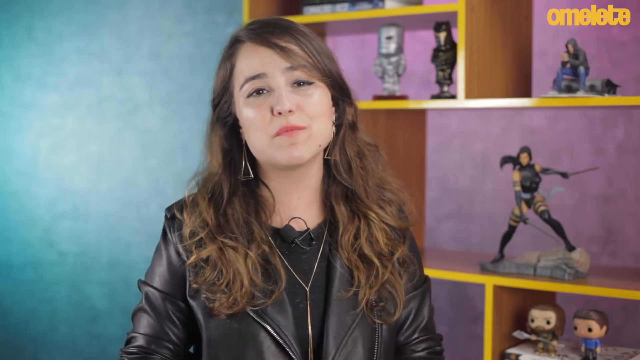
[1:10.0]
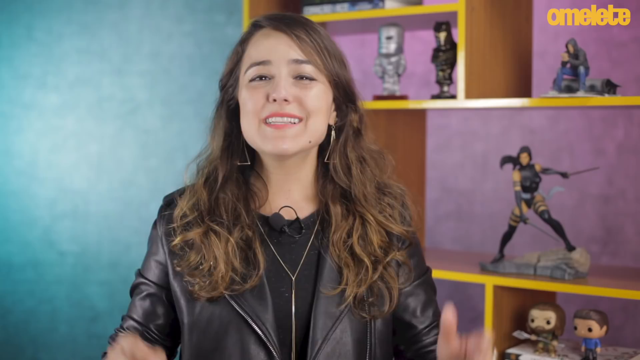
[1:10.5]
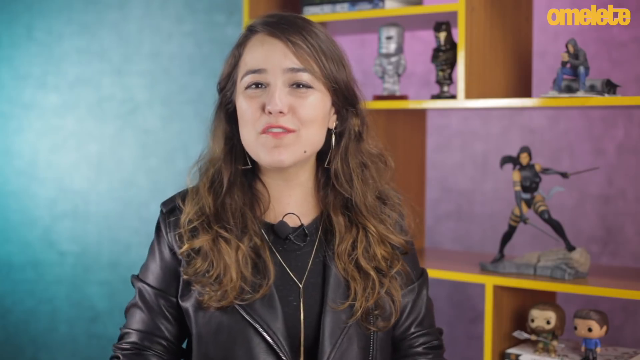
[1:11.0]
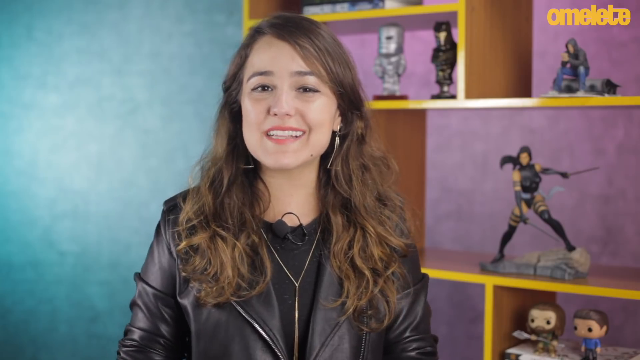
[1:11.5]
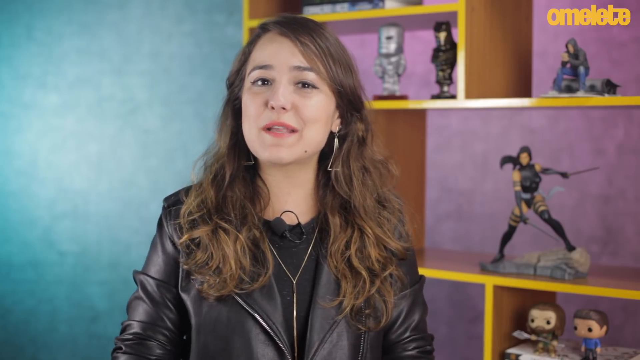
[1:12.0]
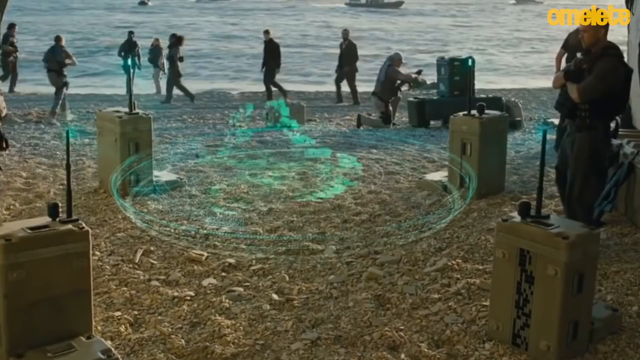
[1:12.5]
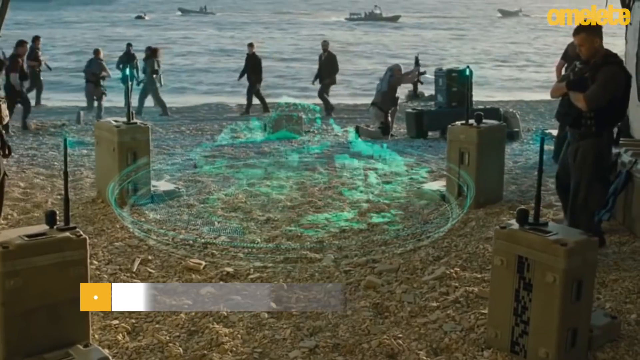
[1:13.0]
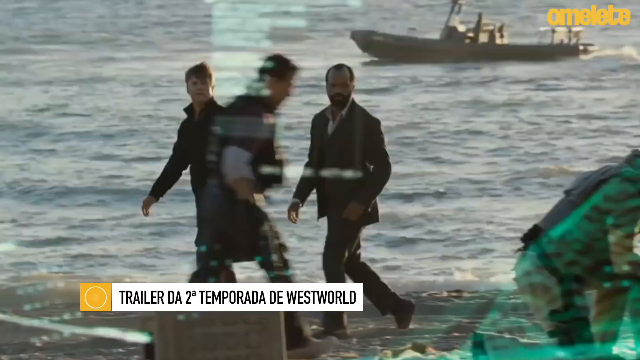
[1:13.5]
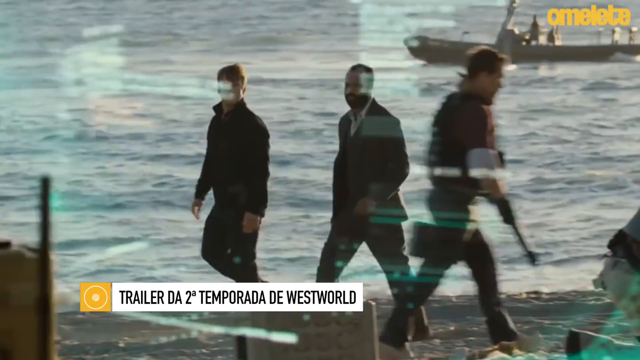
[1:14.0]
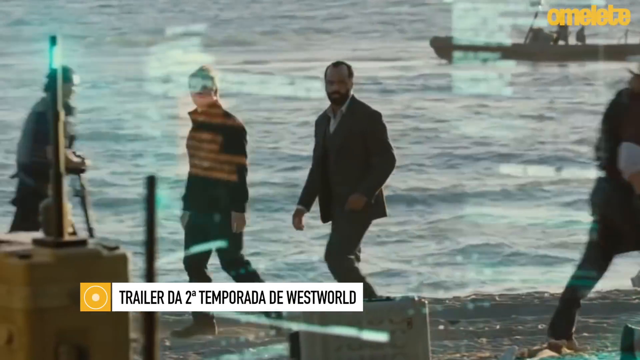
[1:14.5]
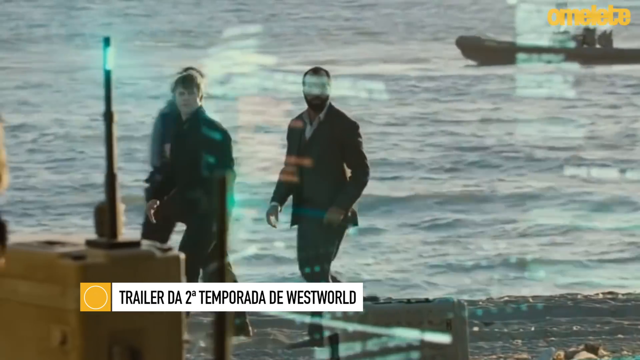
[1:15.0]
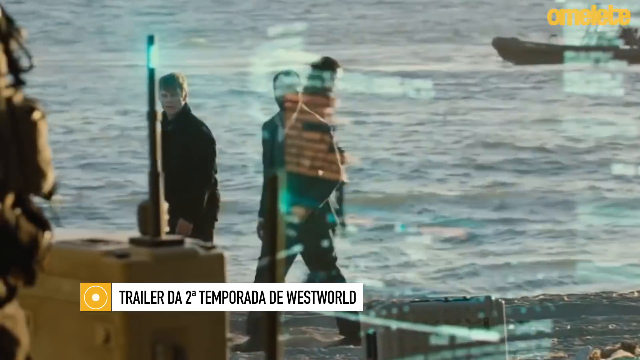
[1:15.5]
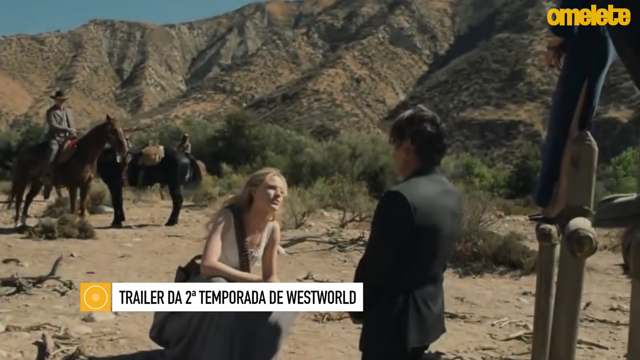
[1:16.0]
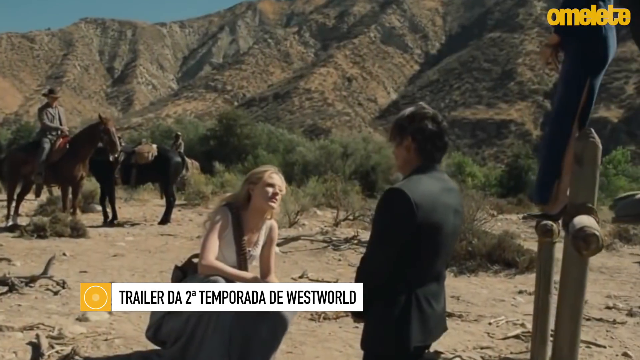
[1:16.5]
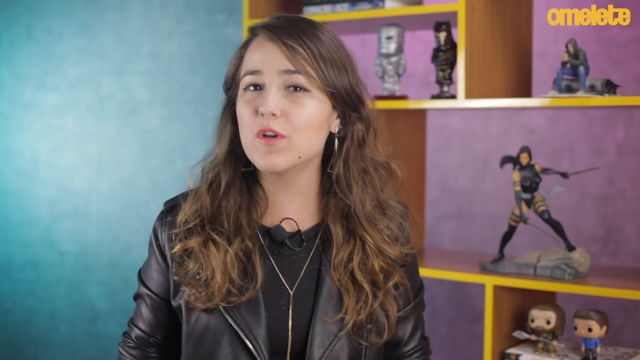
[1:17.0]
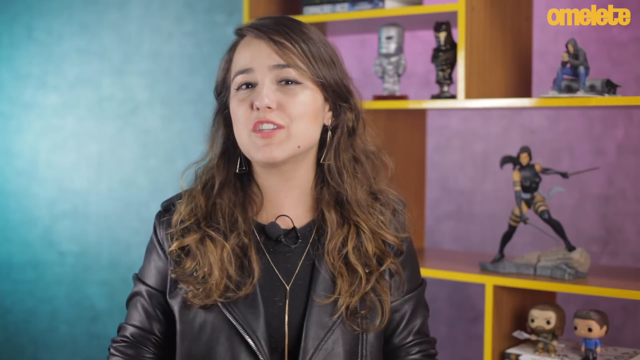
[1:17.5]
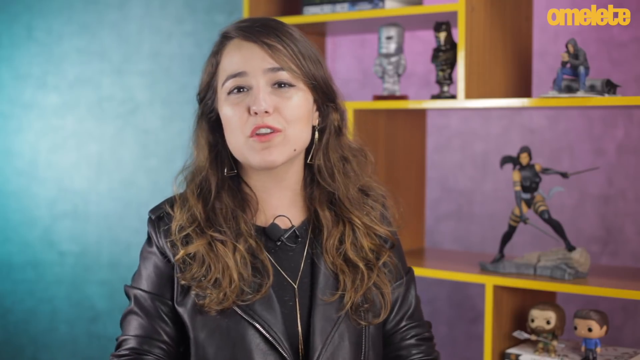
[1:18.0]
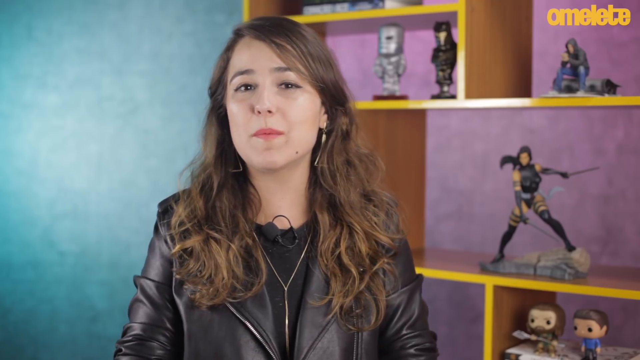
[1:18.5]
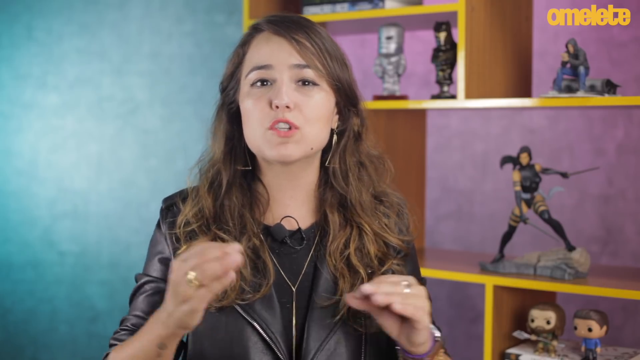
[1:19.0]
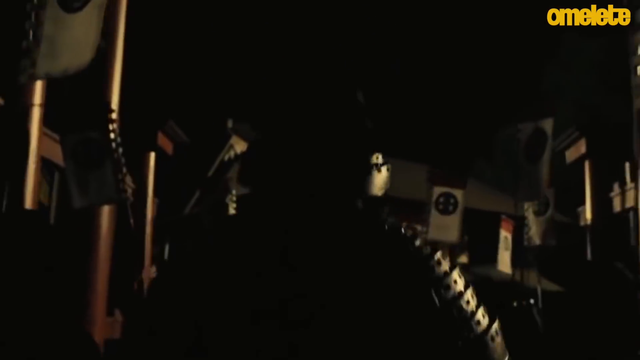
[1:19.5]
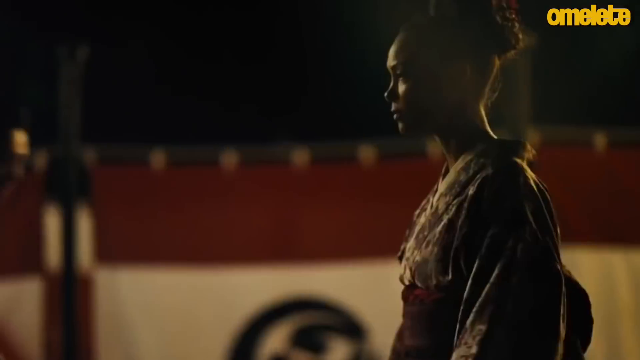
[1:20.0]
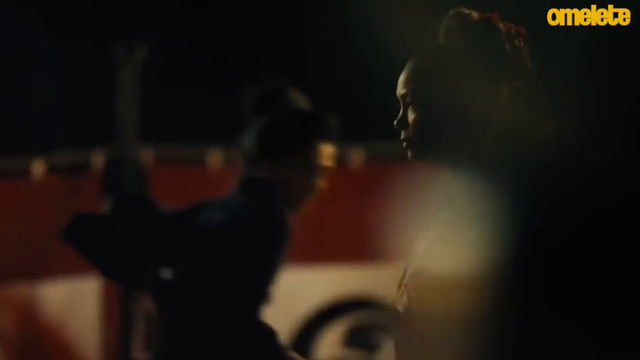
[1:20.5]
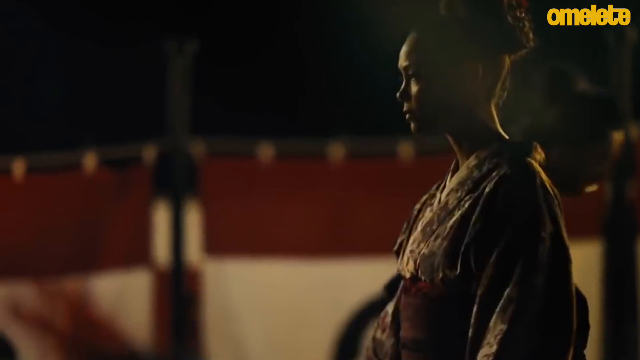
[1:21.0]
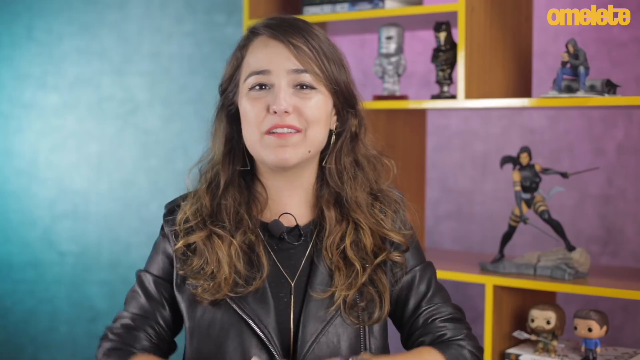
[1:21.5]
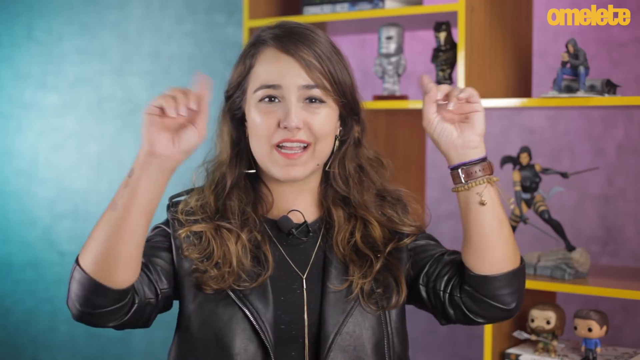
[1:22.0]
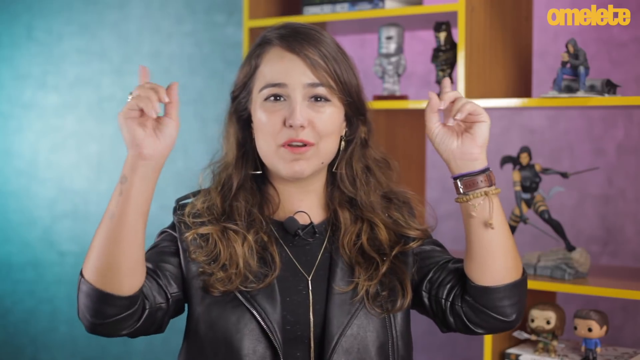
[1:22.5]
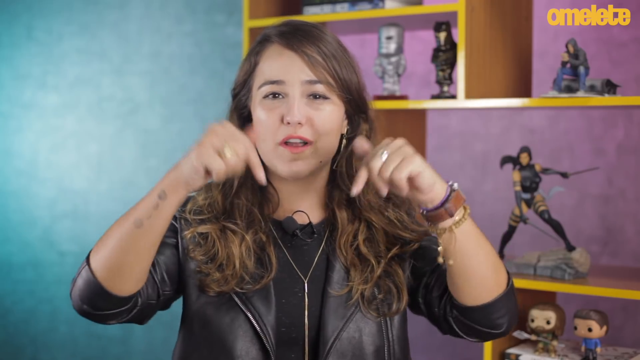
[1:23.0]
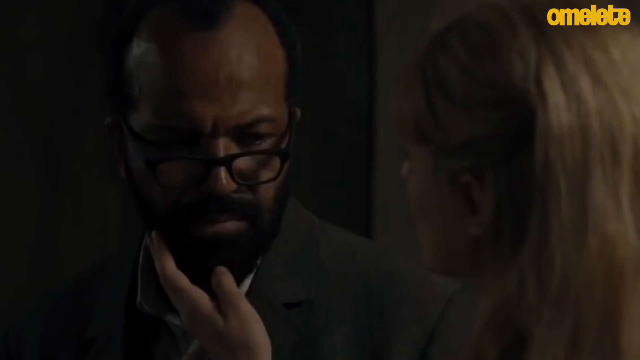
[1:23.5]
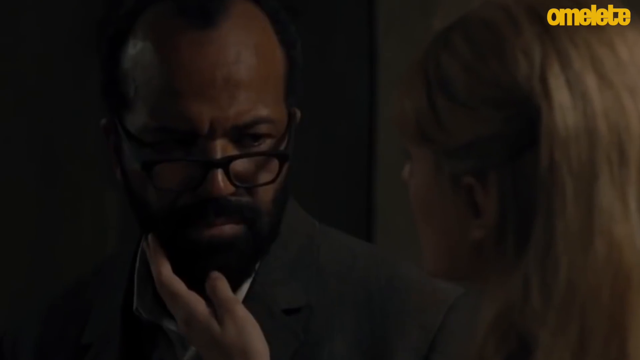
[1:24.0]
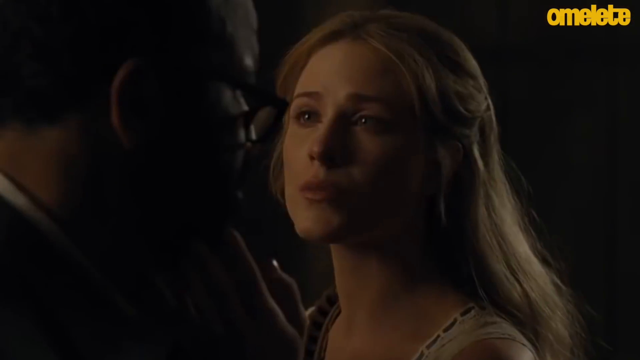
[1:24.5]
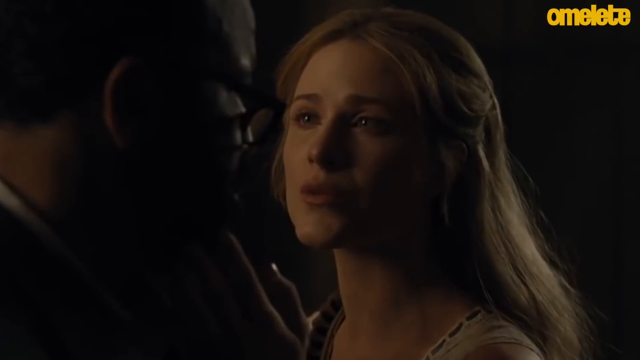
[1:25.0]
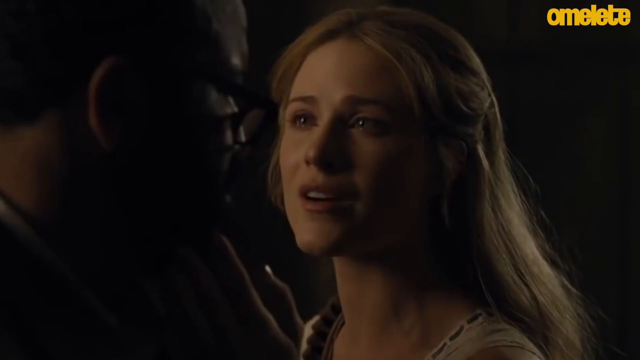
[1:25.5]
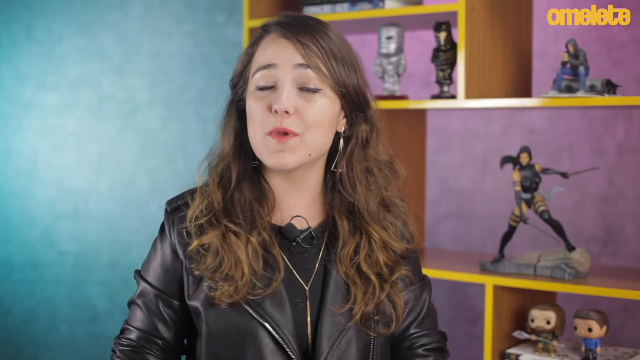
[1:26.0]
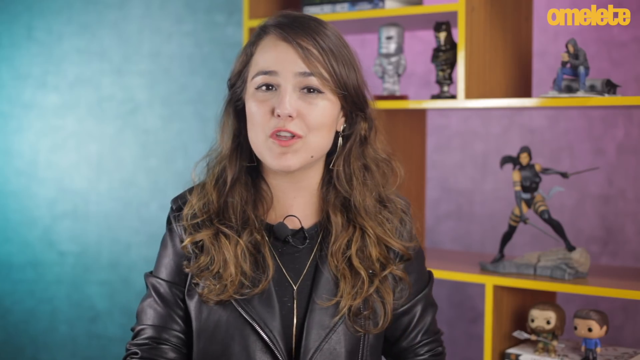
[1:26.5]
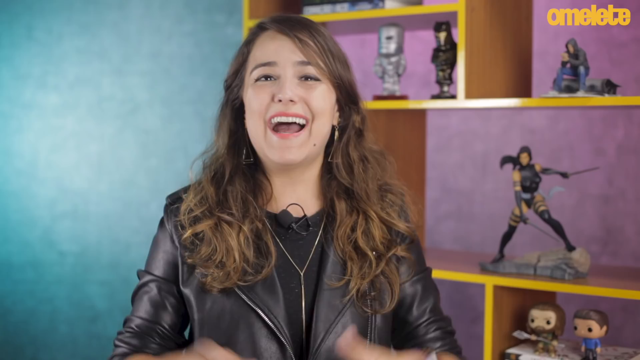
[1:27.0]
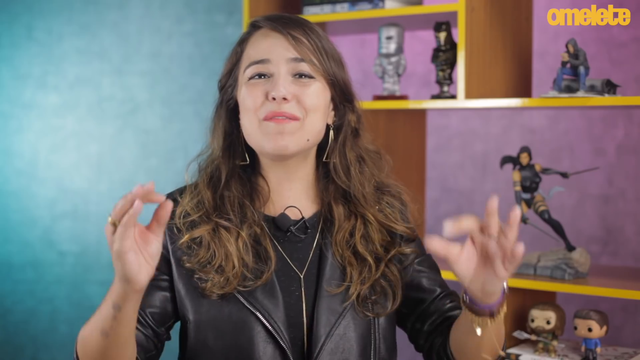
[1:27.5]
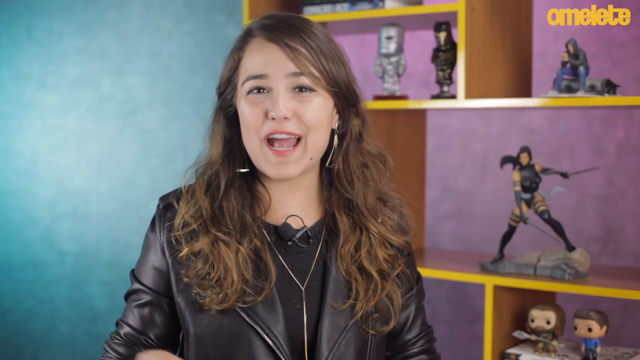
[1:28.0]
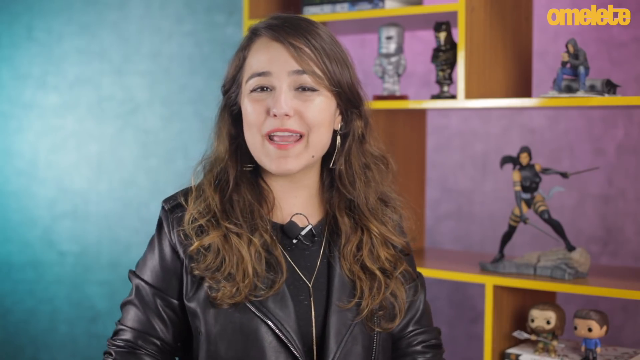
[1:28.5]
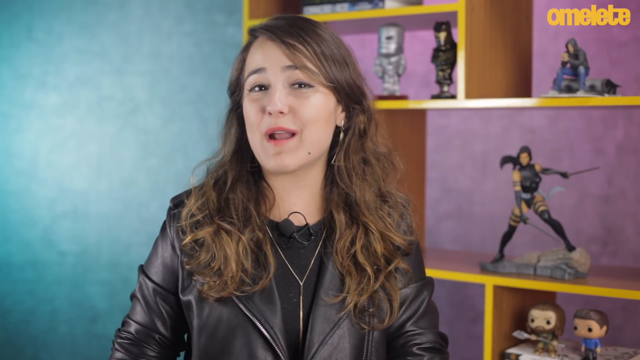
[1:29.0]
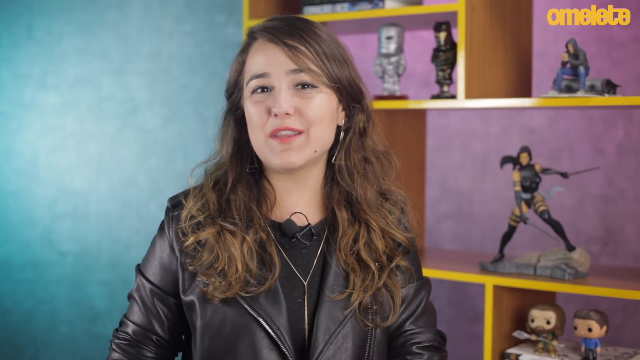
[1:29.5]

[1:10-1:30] The woman faces the camera, then the video switches to what seems to be a movie scene with a caption below that includes "temporada" and "west world". It switches to a man talking to the camera, then to another movie scene showing a character who seems to be a knight, in a black helmet and black outfit, walking away from the camera, while a black woman seems to walk in front of the camera. The woman is shown talking again, followed by a scene of a white woman holding the beard of a man wearing spectacles. It switches back to the woman talking briefly, then to a man who seems to be wearing a yellow top.